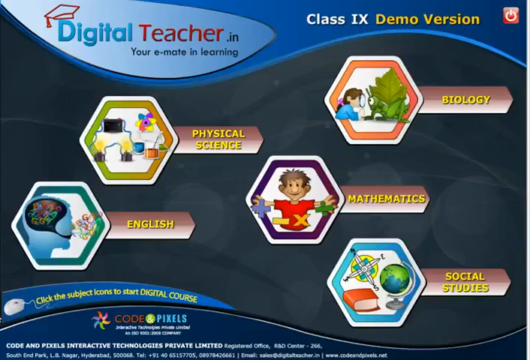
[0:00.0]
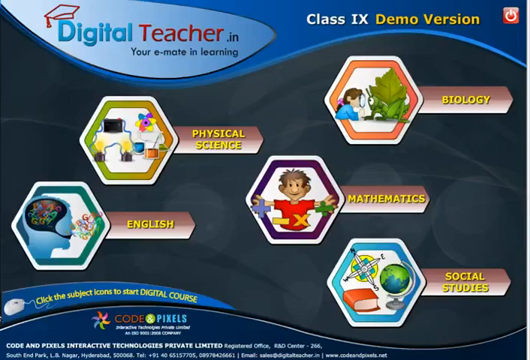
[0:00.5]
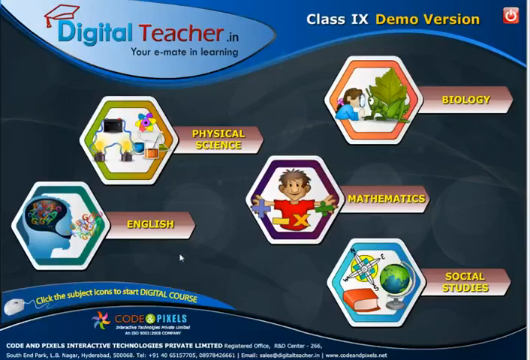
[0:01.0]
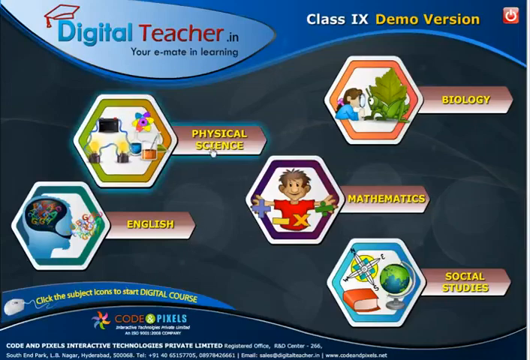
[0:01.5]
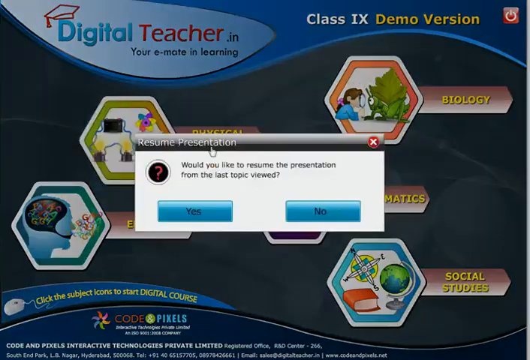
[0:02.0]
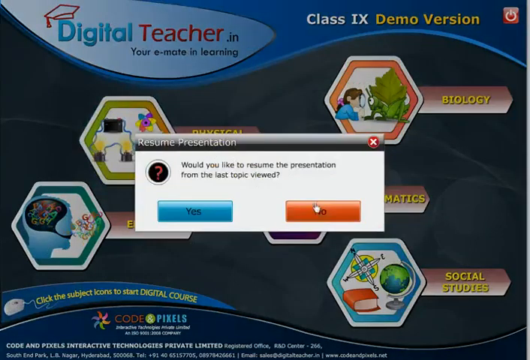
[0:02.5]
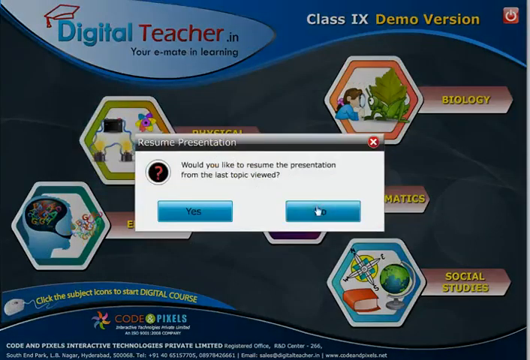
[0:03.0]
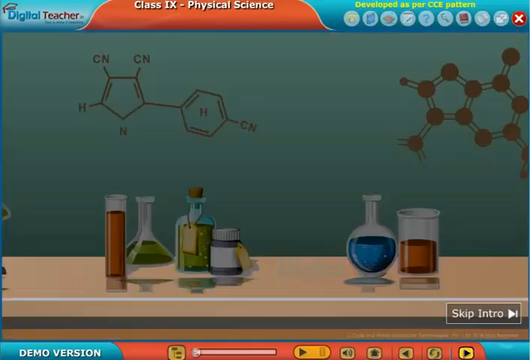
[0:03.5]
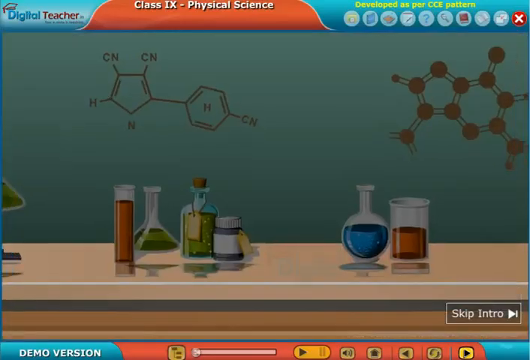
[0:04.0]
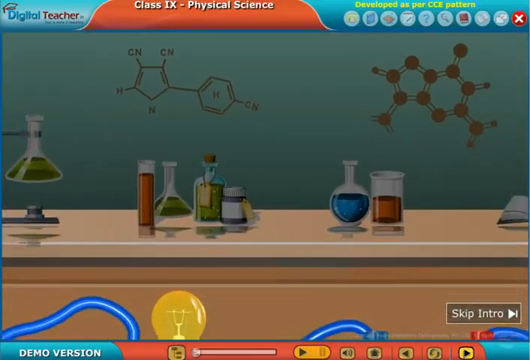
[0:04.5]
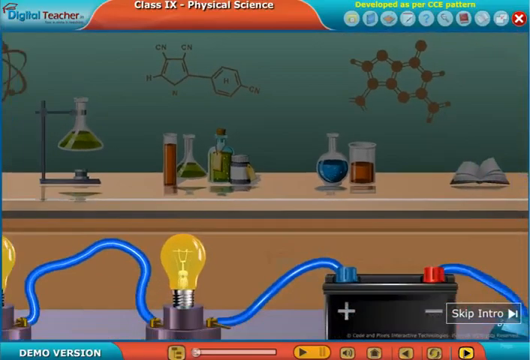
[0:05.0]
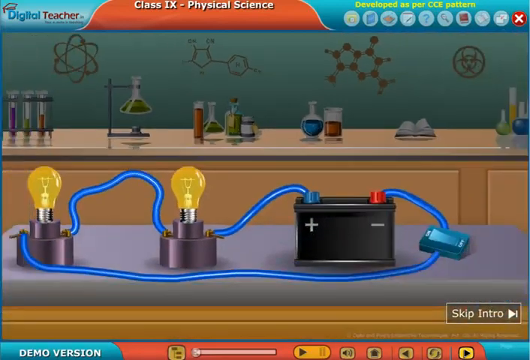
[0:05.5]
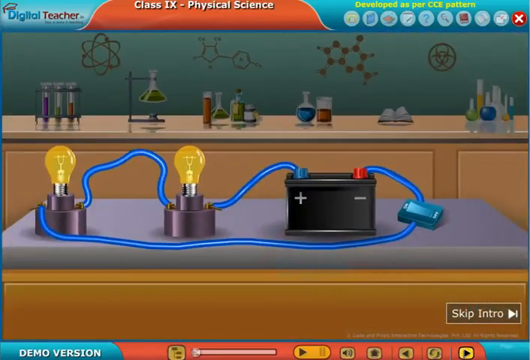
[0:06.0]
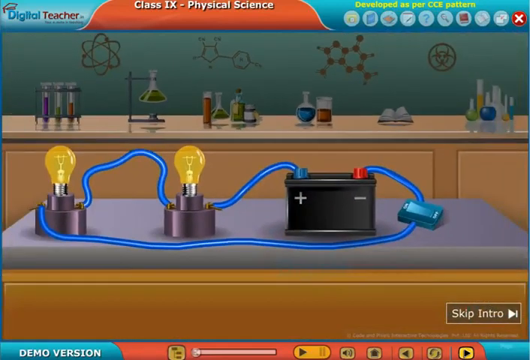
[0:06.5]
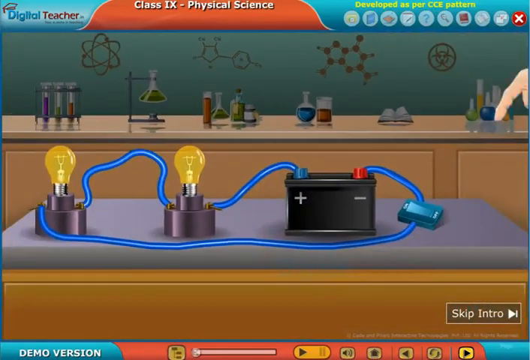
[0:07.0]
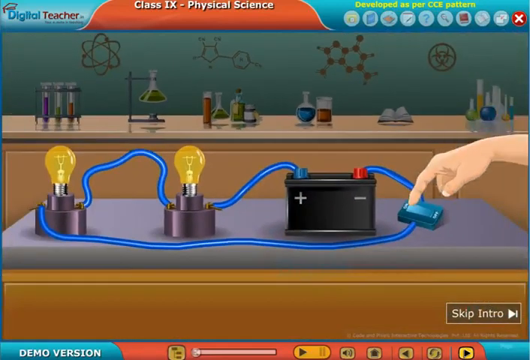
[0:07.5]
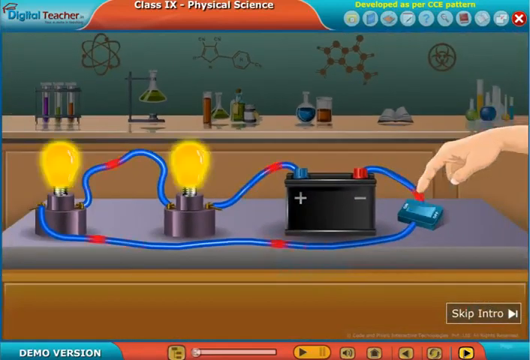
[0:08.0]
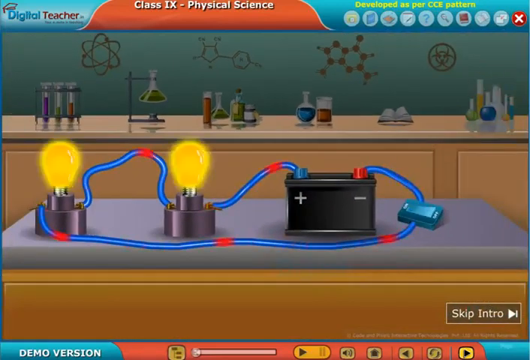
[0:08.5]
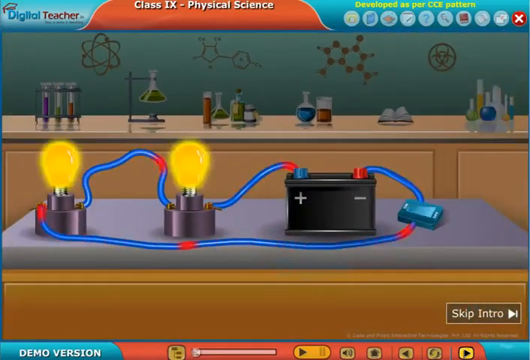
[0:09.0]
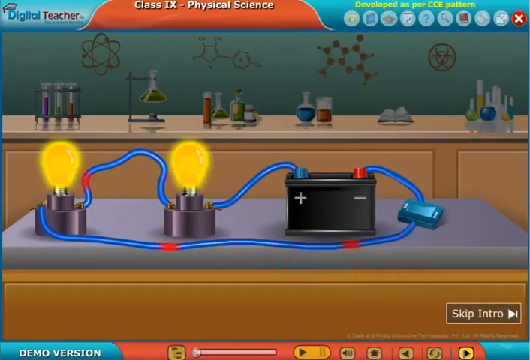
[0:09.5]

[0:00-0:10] The text "digital teacher" appears in the left corner. In the top right corner is written "class ix demo version," and at the end of it there is a small red stop button. In the centre are subject logos: physical science, biology, English and mathematics, and social sciences. In the bottom left corner is written "click the subject icons to start the digital course," and at the bottom is written "code pixels." Various experiments are shown, and a hand presses a button. Then comes an experiment with a battery, a cable and a flickering light.